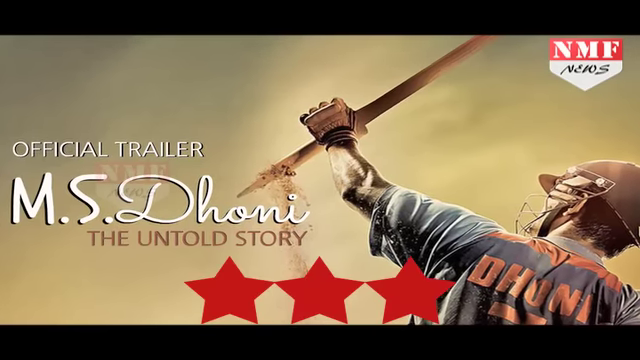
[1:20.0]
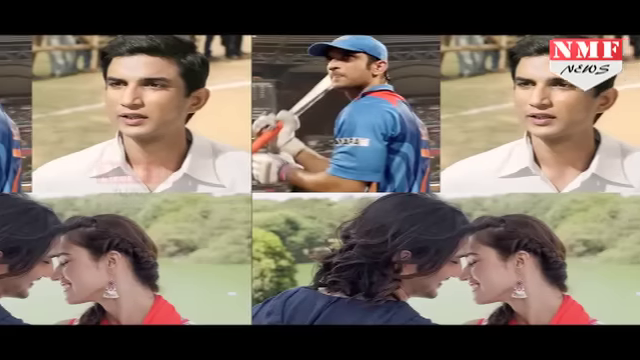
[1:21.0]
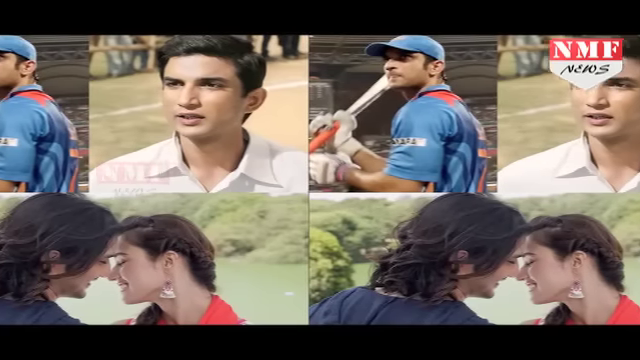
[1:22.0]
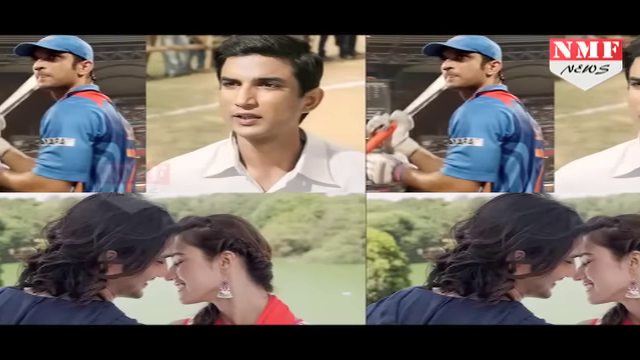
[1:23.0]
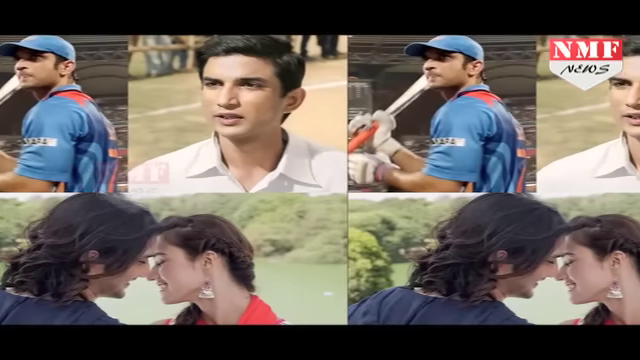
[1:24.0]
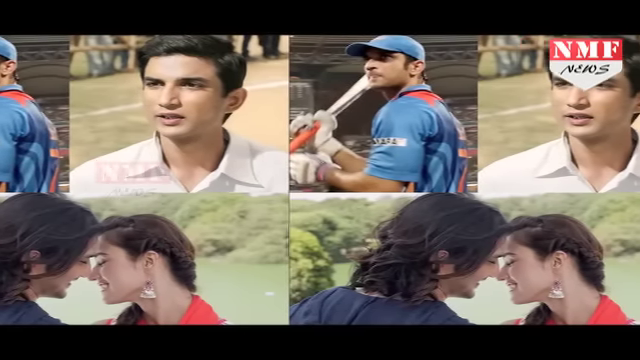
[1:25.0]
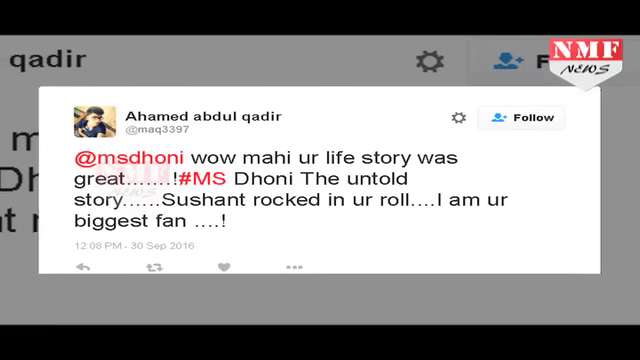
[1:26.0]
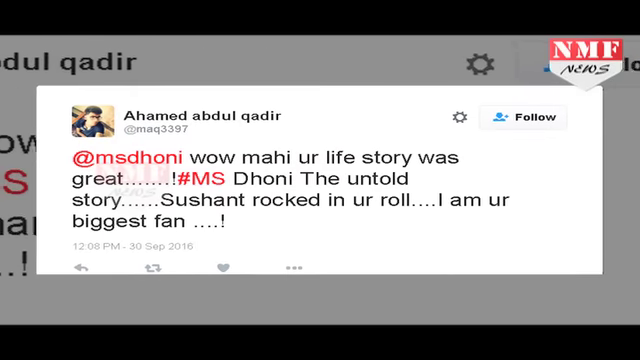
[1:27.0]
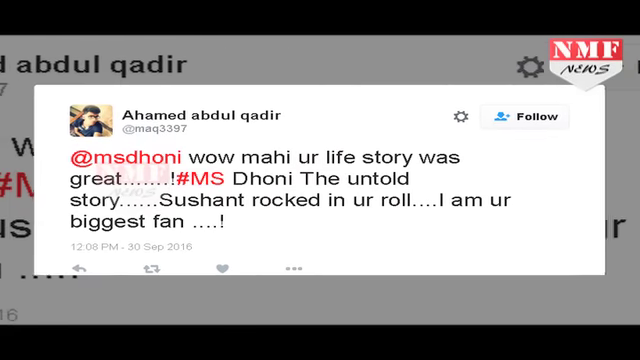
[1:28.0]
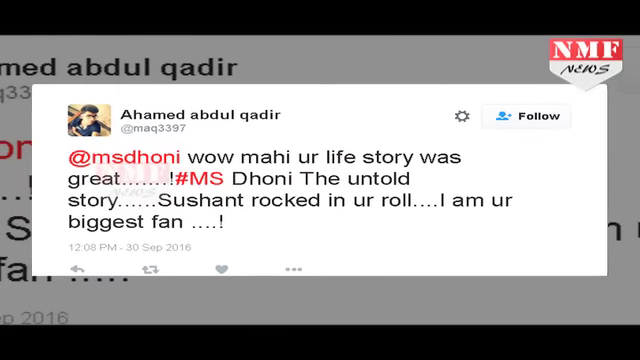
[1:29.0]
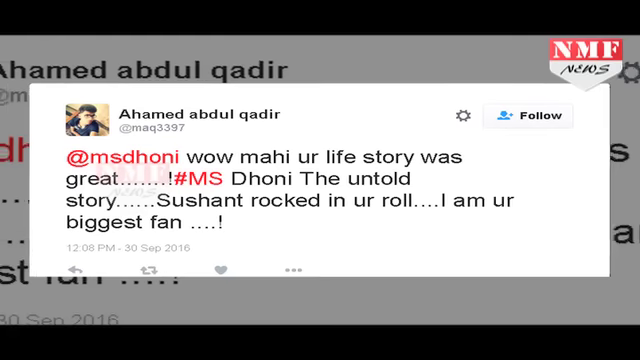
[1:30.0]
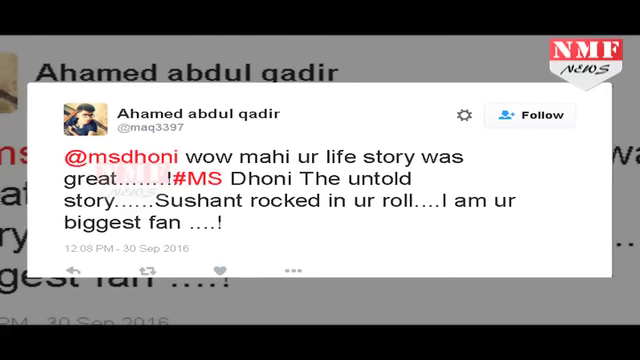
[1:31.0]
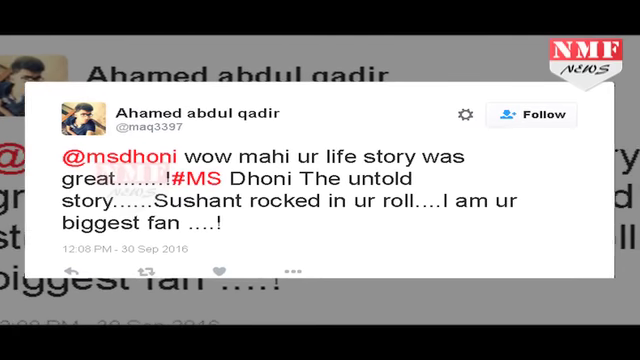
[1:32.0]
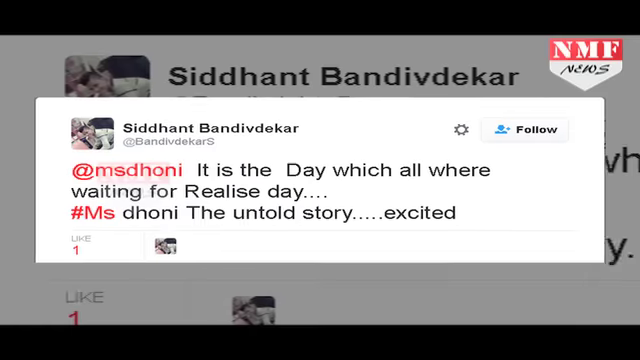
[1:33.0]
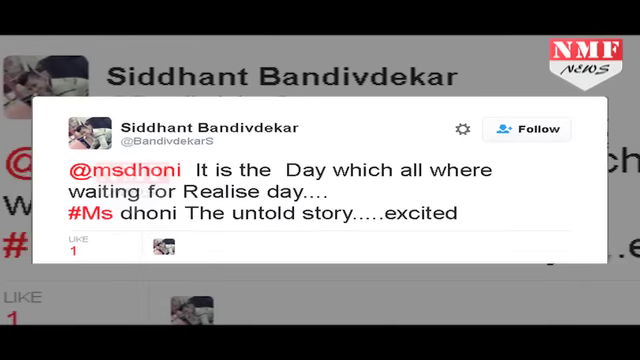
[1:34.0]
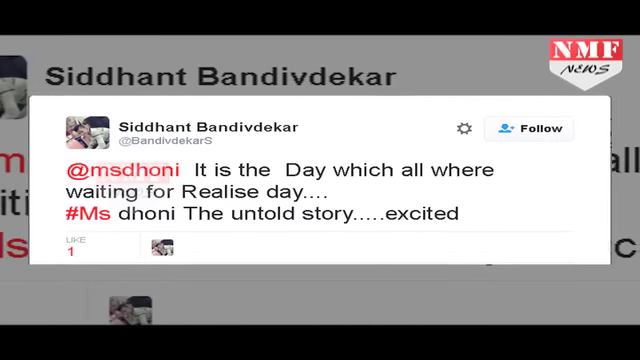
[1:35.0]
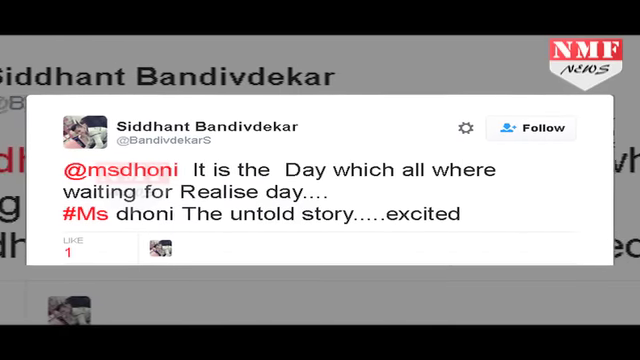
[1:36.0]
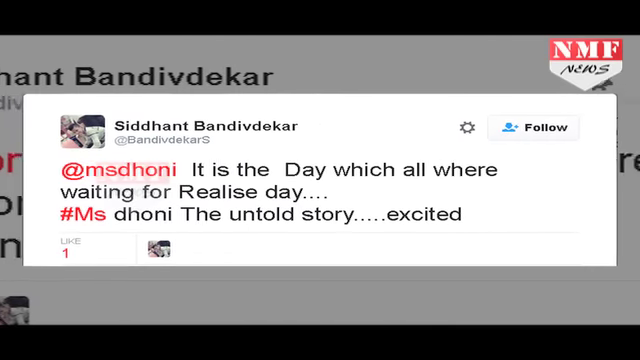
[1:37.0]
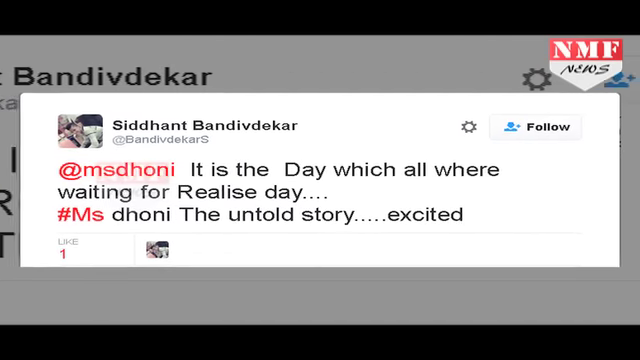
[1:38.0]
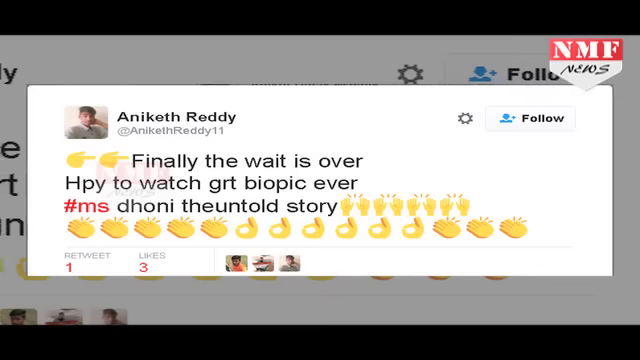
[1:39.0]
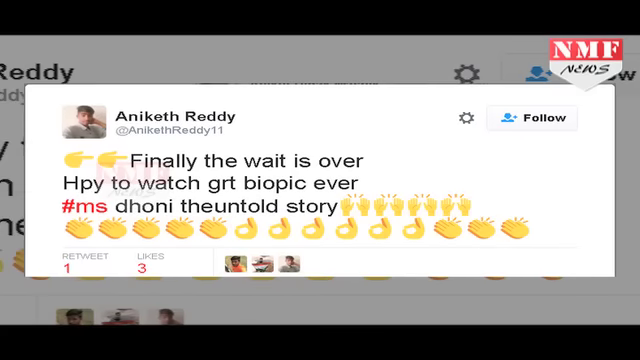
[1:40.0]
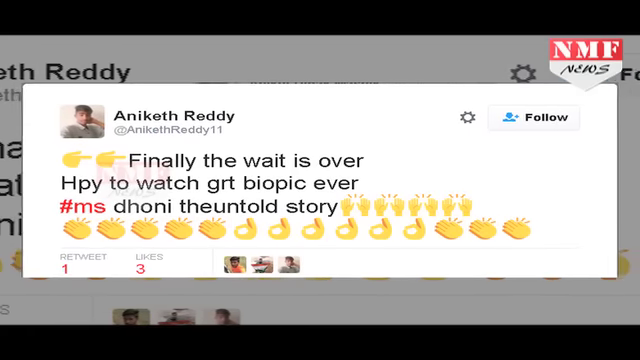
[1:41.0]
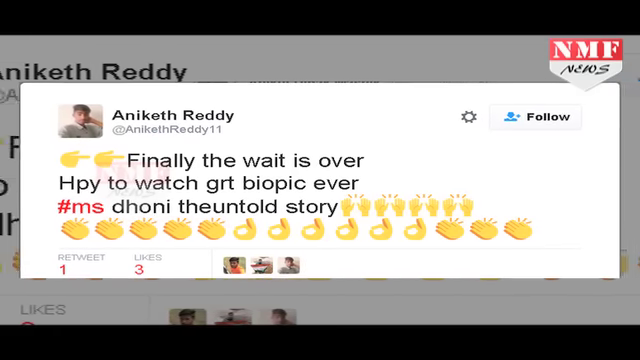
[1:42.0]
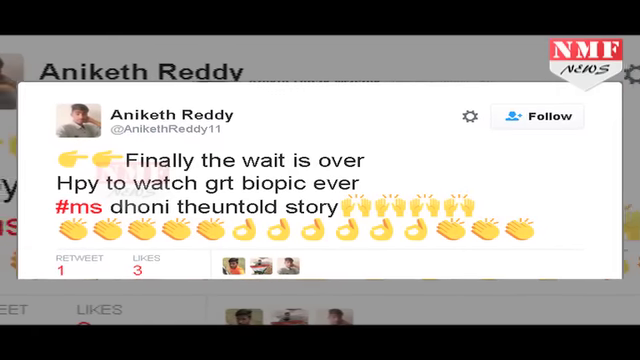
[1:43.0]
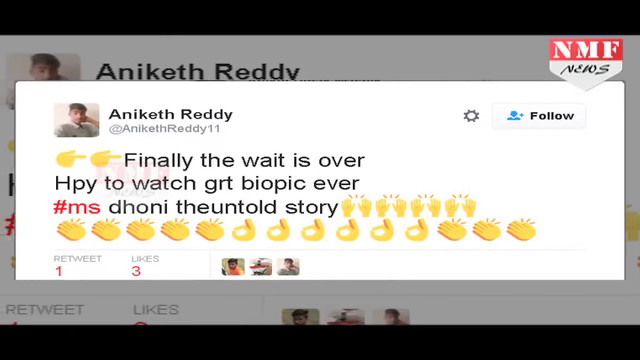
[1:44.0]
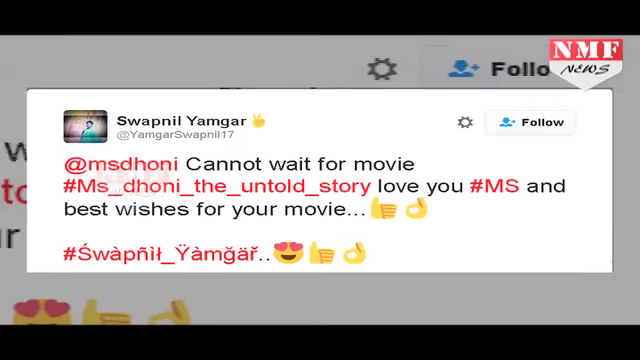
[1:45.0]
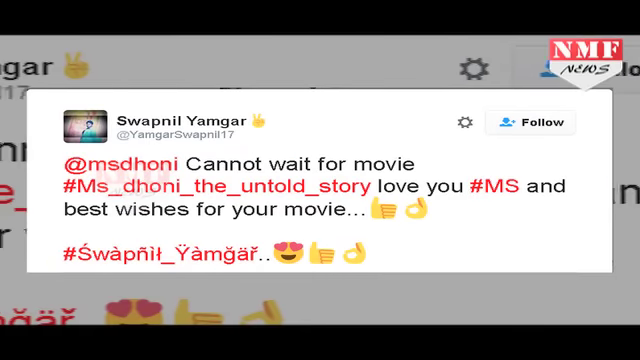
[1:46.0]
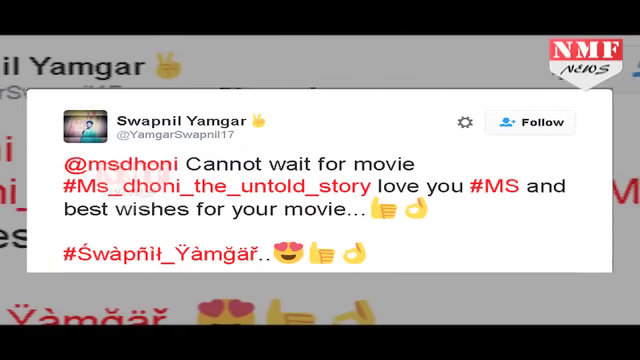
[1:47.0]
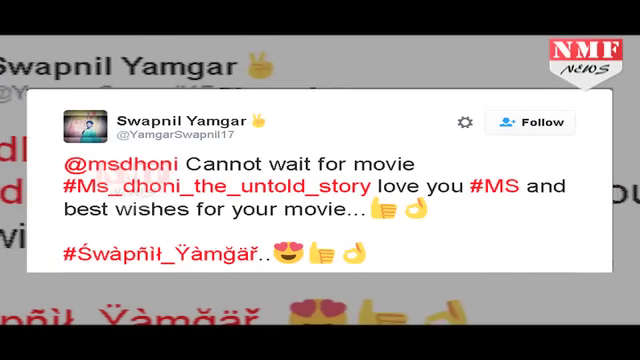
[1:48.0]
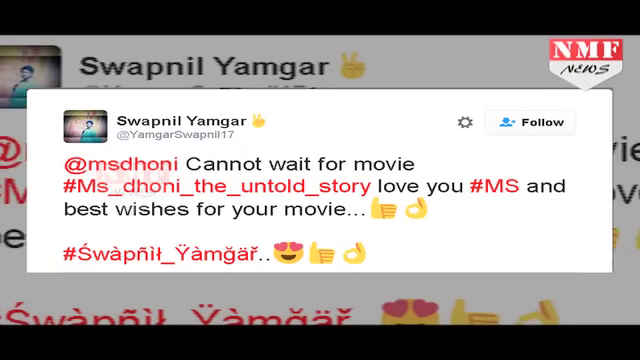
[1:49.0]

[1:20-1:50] The official trailer for MS Dhoni, The Untold Story appears with three red stars and the back of his jersey. A moving sequence of clips from the movie follows, apparently going through his entire life: at some points he has short hair, at others long hair, and he wears a baseball cap and a jersey. He is also kissing or about to kiss a beautiful young lady with dark hair who appears to be his girlfriend. Social media texts about the movie appear. One reads "your life story was great. The Untold Story rocked in your role. I'm your biggest fan." Another reads "it is the day which we were all waiting for, the release day, excited." More clips follow, then "Finally, the wait is over" with many hand-clapping emojis, more clips, and "cannot wait for the movie." The video then returns to the original official trailer poster for MS Dhoni, The Untold Story.